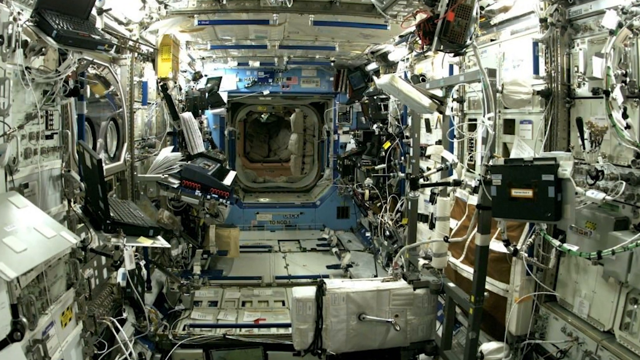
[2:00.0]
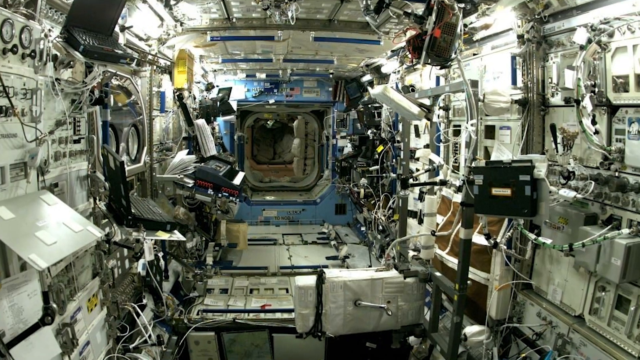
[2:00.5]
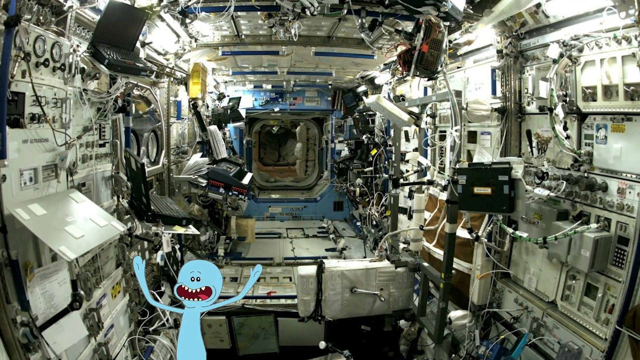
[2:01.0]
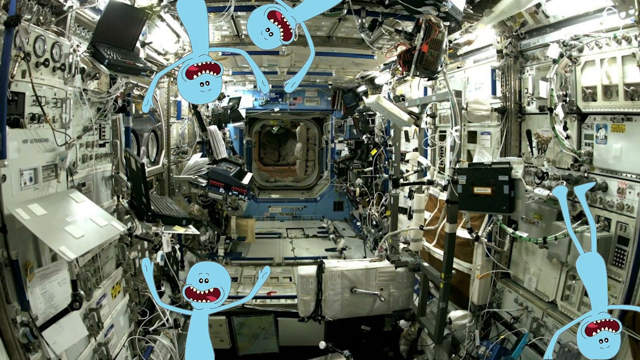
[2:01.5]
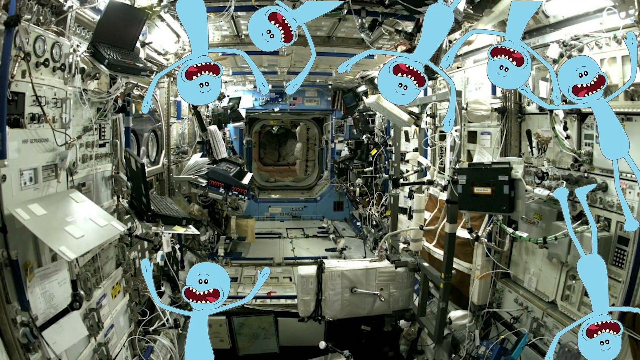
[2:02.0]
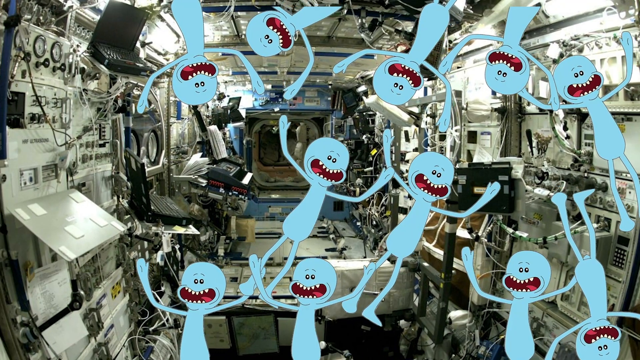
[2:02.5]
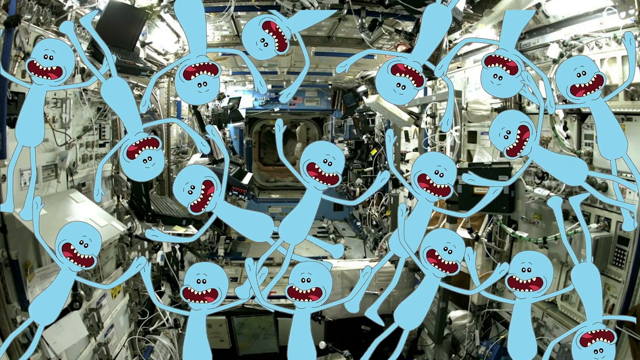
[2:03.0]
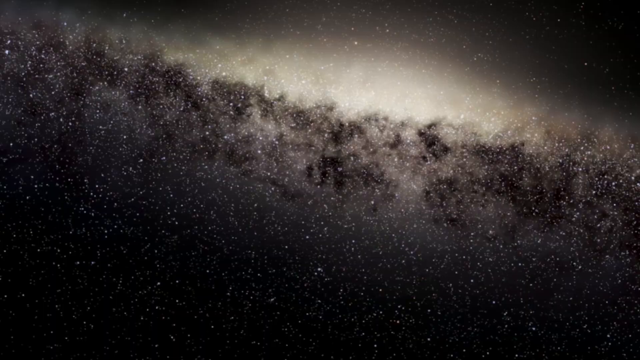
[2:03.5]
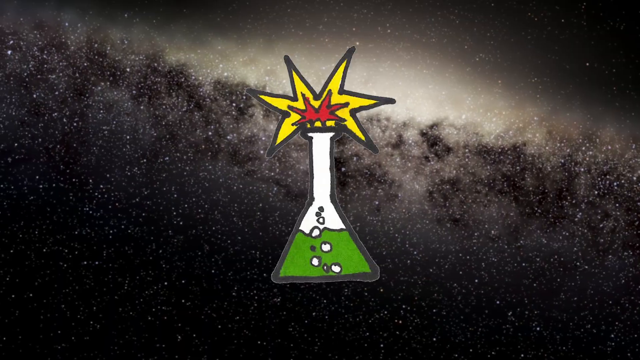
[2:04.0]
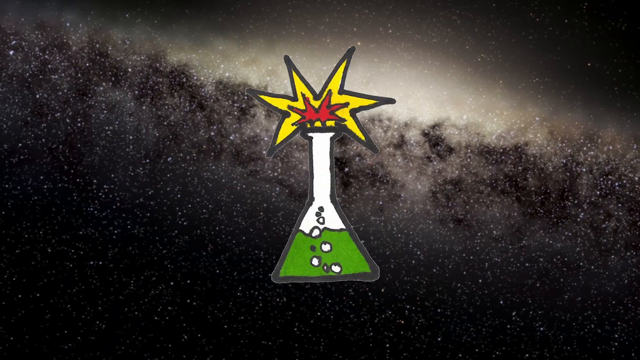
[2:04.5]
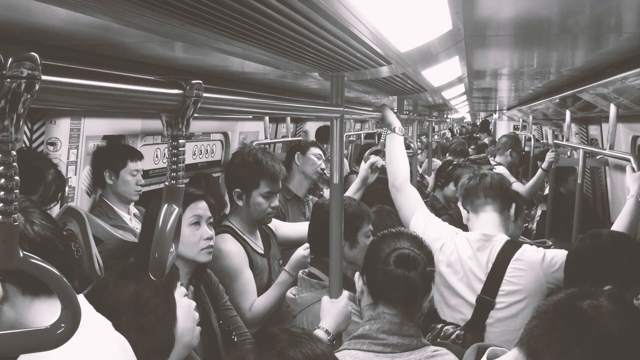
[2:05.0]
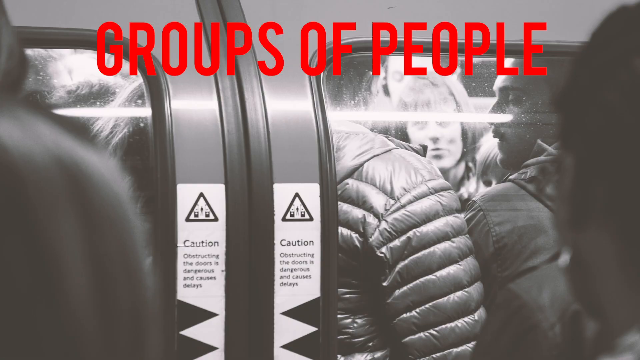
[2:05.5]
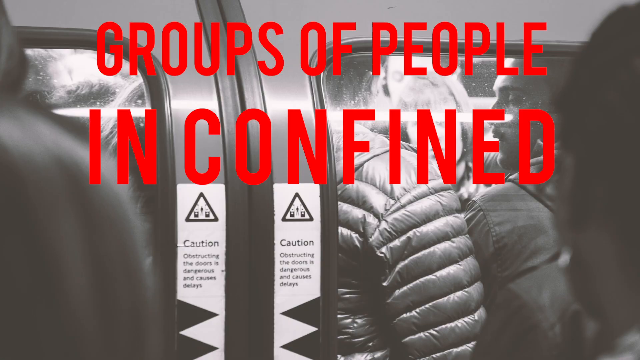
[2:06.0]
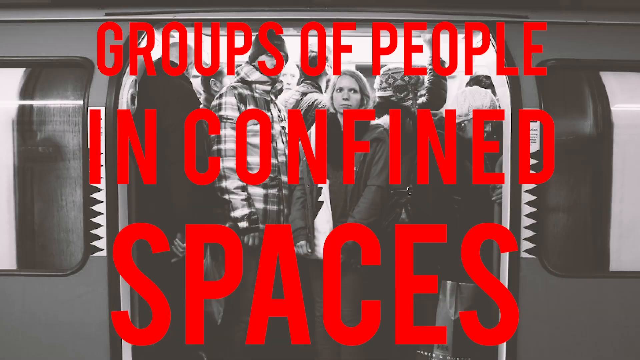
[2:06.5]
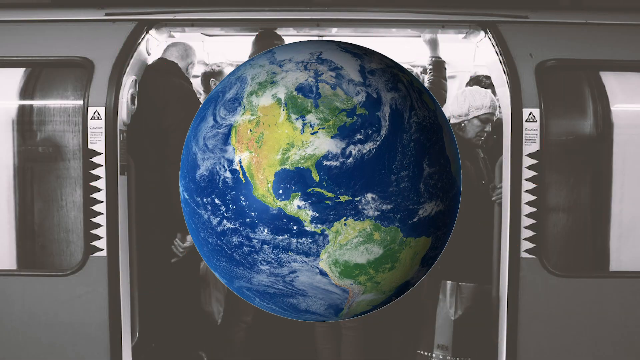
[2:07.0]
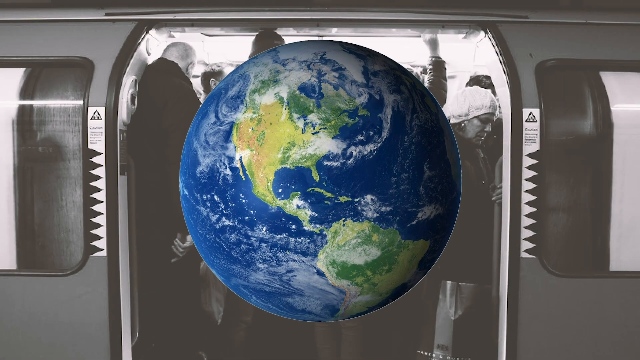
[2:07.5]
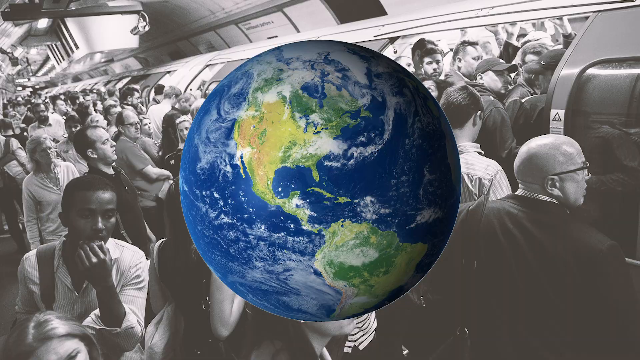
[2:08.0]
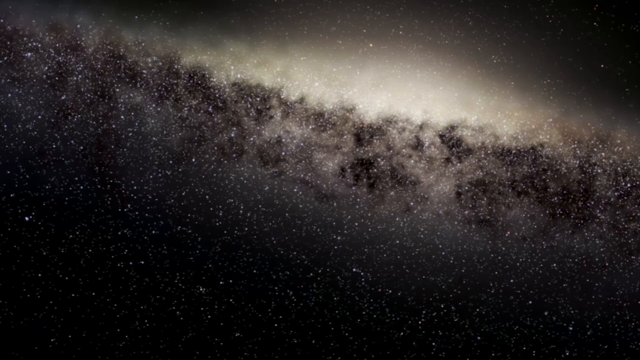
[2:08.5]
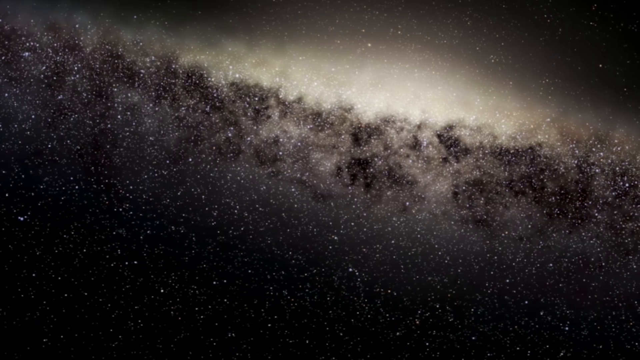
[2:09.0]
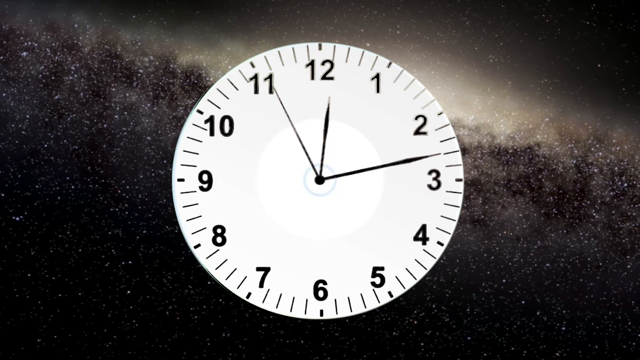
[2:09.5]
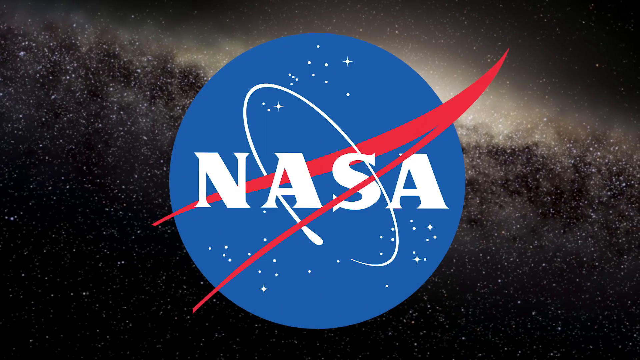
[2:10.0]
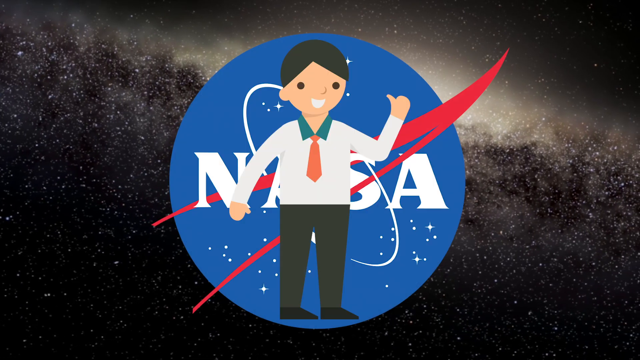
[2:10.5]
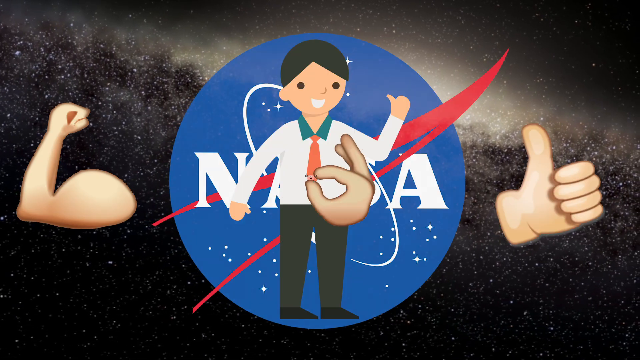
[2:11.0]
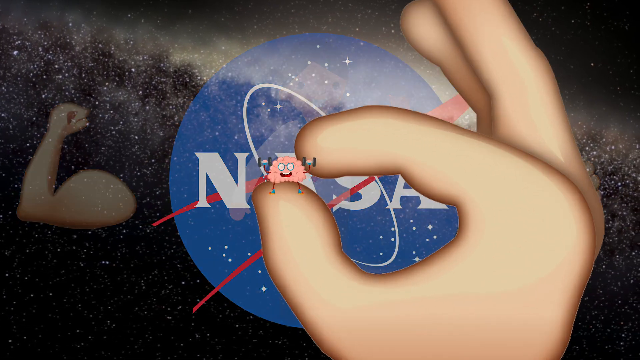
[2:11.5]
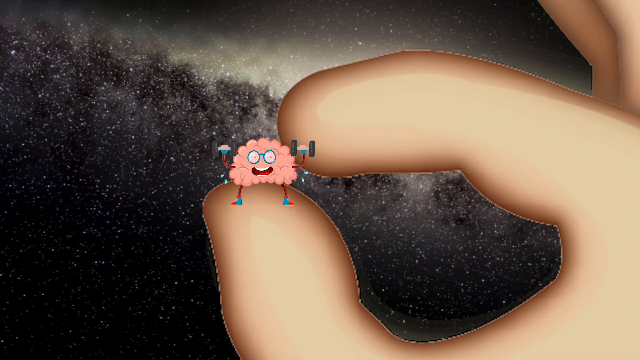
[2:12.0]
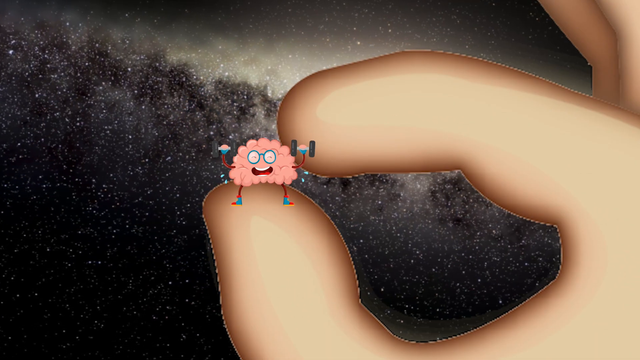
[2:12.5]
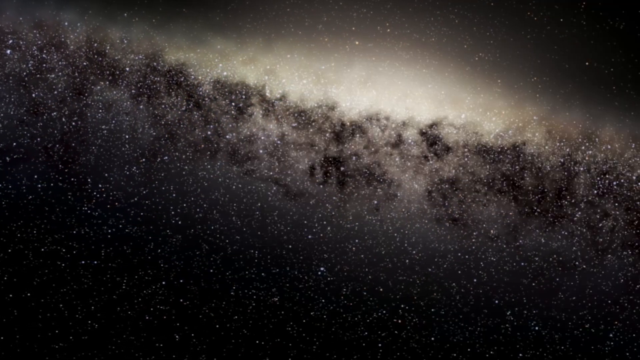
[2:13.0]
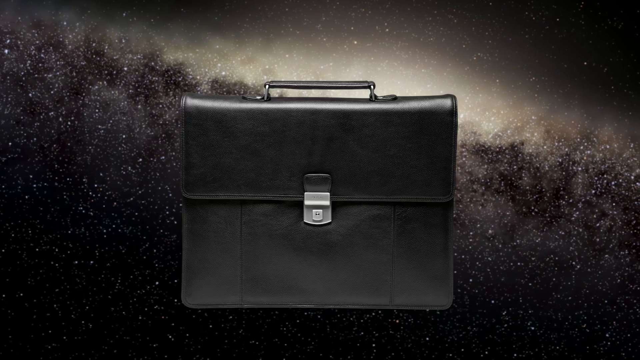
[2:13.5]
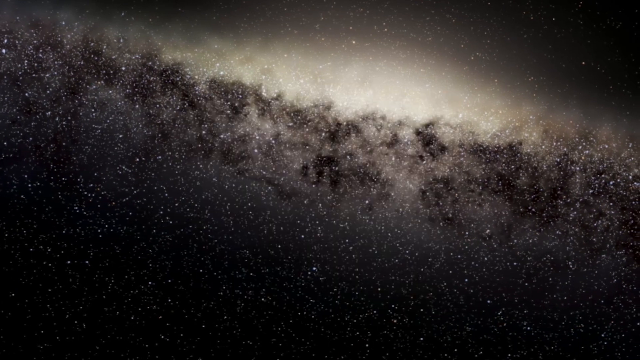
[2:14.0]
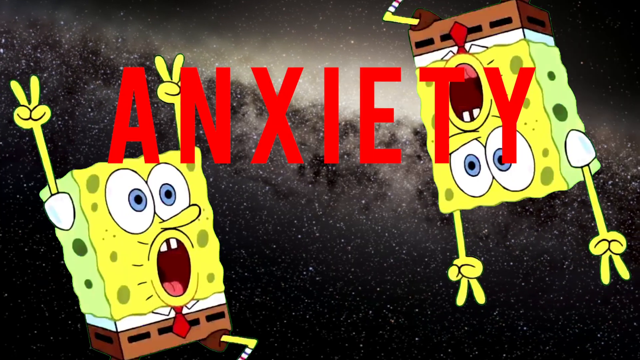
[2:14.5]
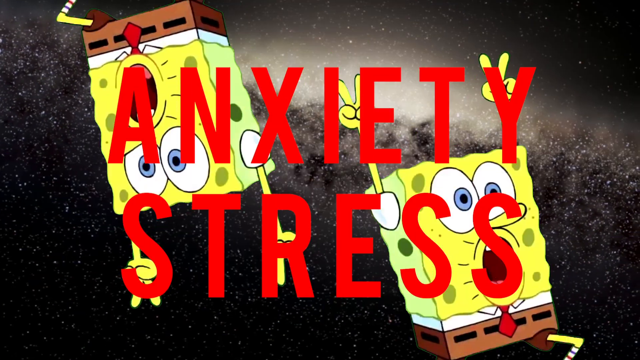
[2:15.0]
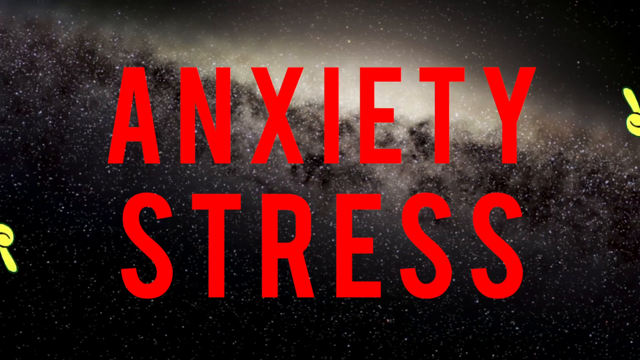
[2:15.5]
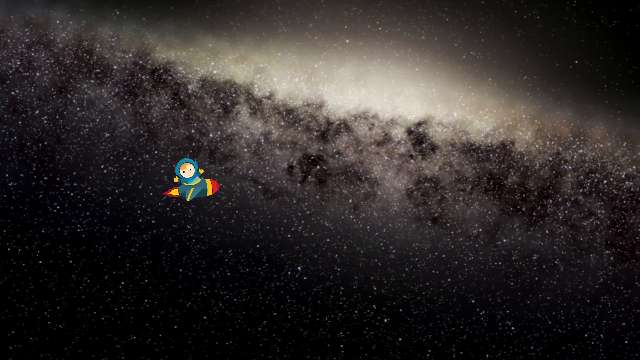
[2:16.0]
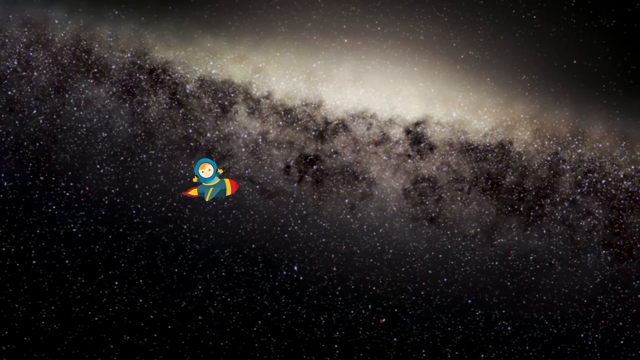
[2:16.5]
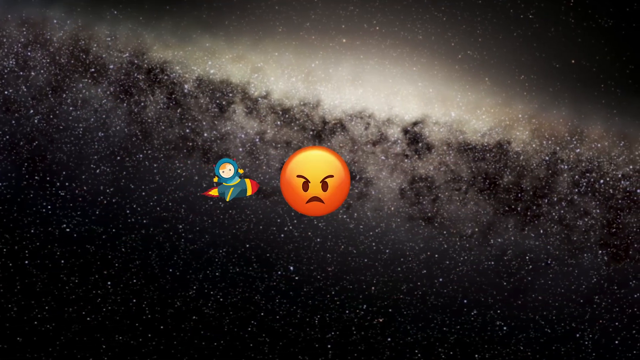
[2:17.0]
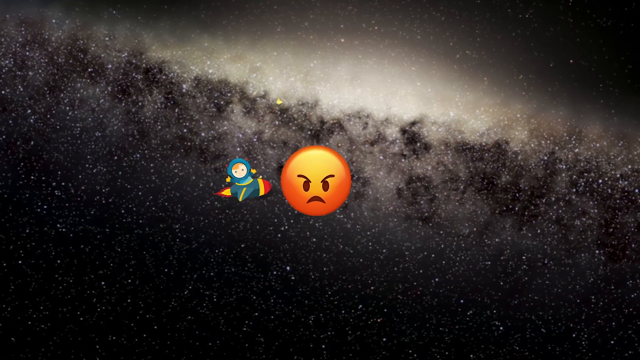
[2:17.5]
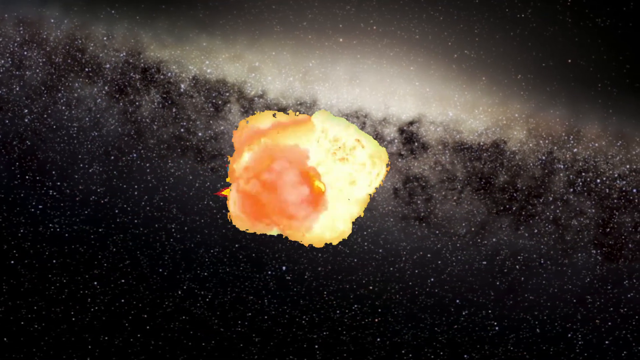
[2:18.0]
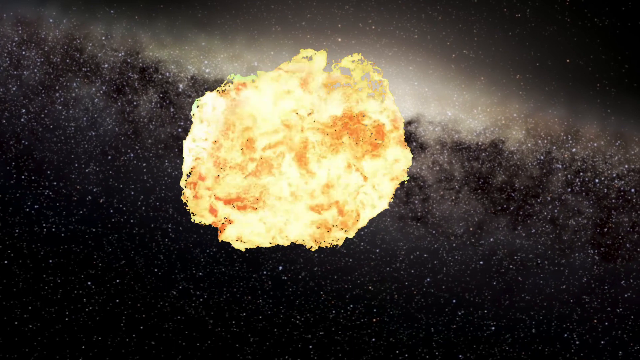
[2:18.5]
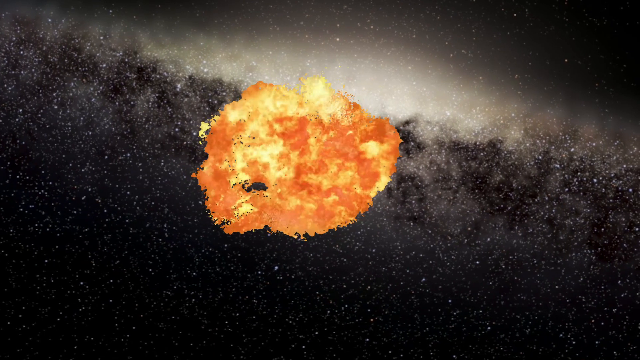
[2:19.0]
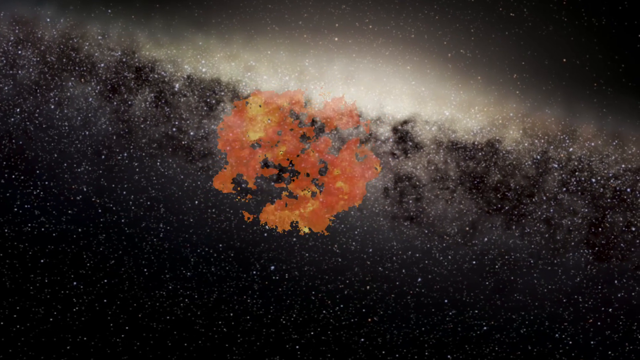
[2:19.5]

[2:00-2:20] The inside of a space station appears, with many different mechanical things. A cartoon character, like a cartoon monster with arms and legs, appears everywhere. Outer space appears again with some sort of yellow explosion. A black and white image shows people in a train or subway, and the words "groups of people in confined spaces" appear. Then a globe of the Earth appears with a black and white image in the background of many people boarding a train or subway. Outer space is shown with a traditional wall clock in the middle. The NASA logo appears in the middle, with a thumbs-up symbol on the right side and an arm flexing its bicep on the left side. A small pink brain wearing glasses works out with dumbbells in its hands. A black suitcase appears, then the words "anxiety and stress" along with two SpongeBob SquarePants figures. A little boy in an astronaut suit is on a rocket, there is an explosion, and then the head of an alien appears.